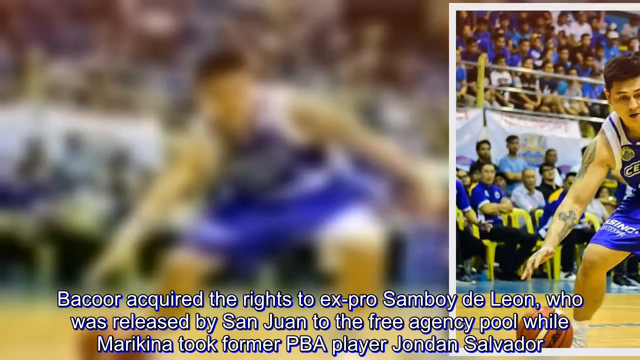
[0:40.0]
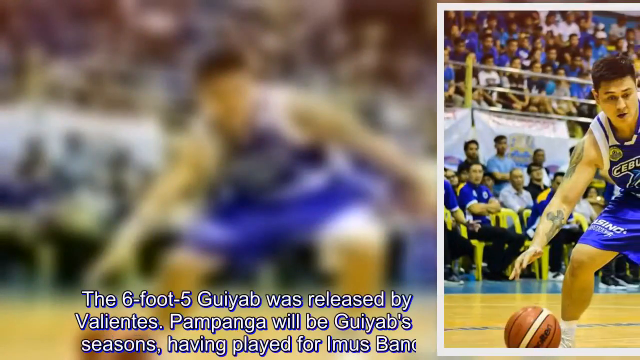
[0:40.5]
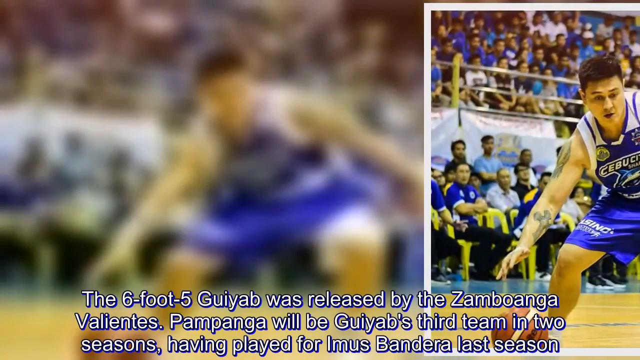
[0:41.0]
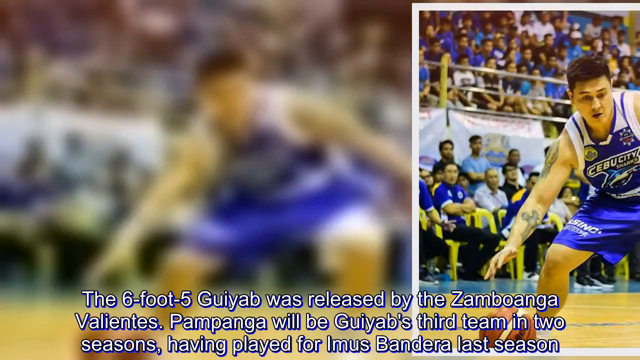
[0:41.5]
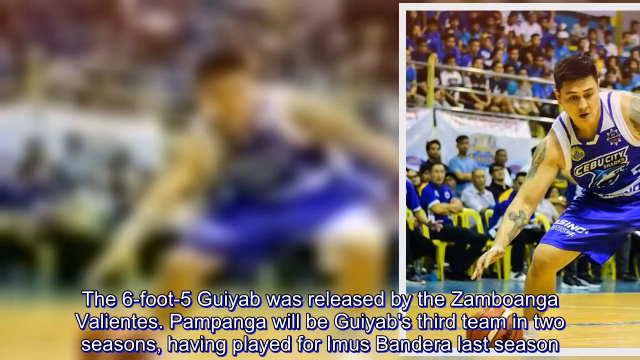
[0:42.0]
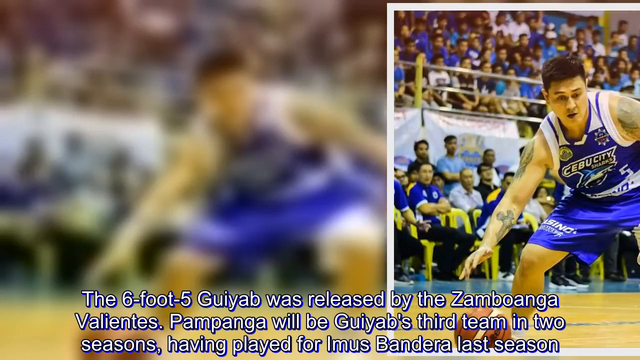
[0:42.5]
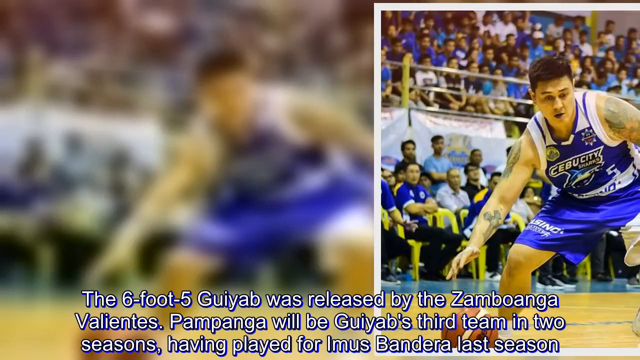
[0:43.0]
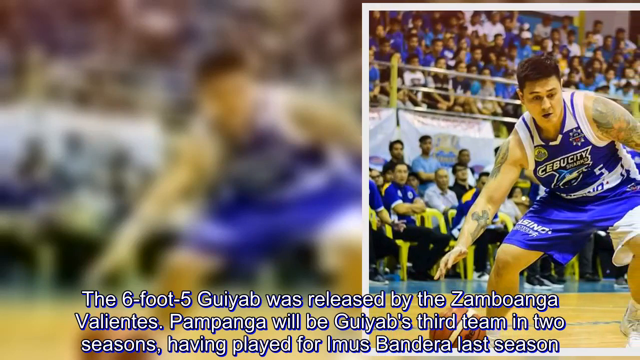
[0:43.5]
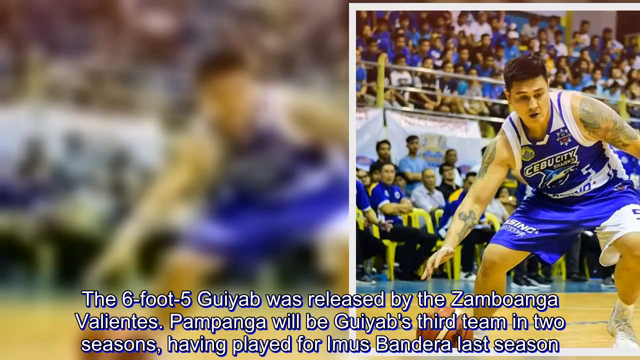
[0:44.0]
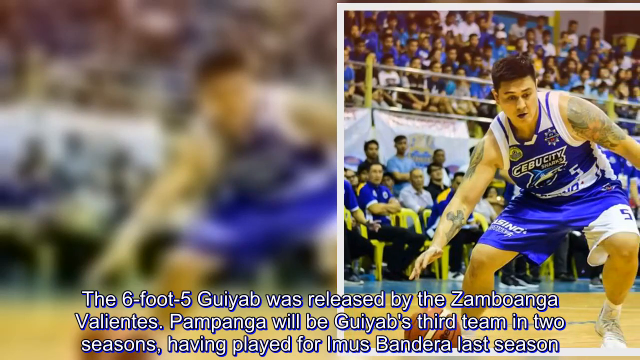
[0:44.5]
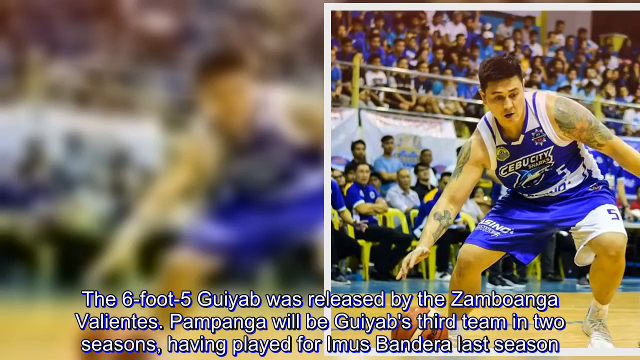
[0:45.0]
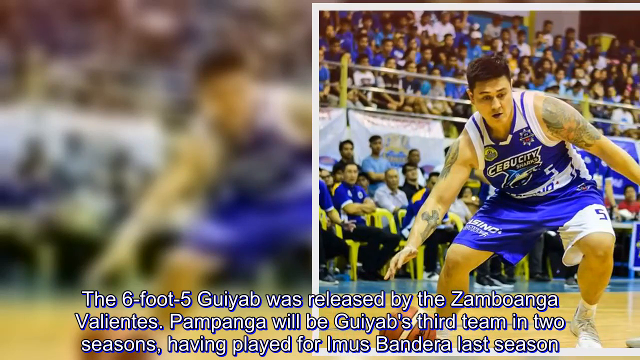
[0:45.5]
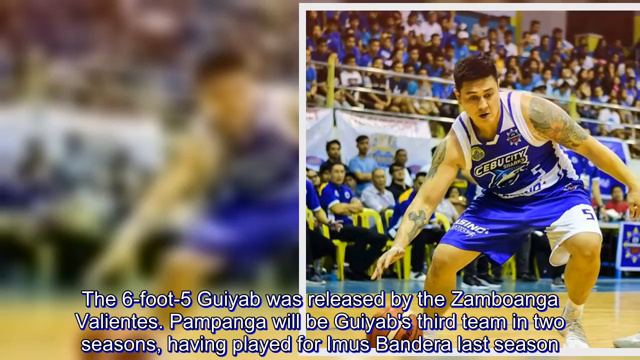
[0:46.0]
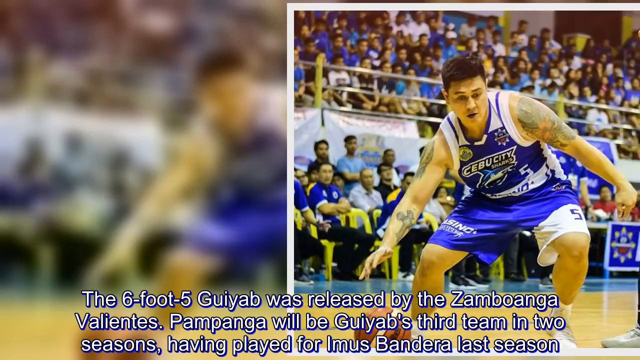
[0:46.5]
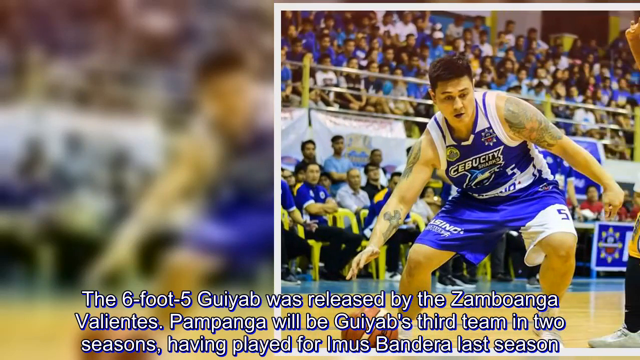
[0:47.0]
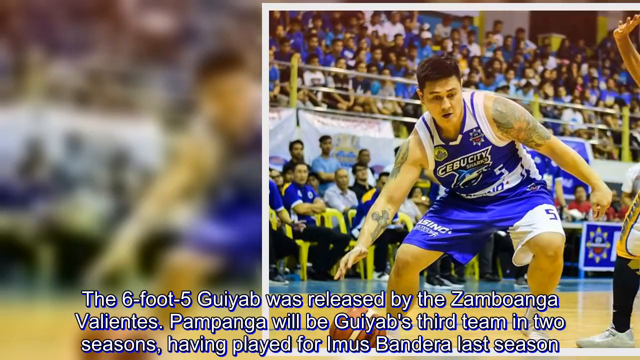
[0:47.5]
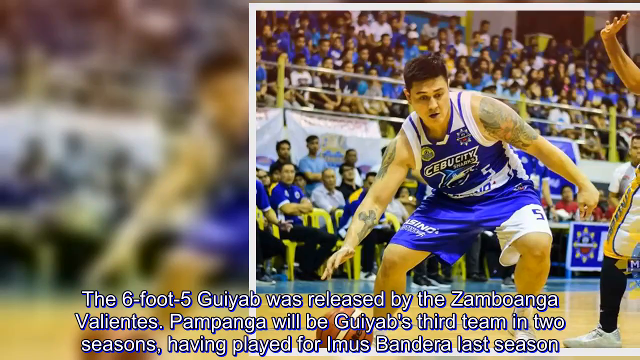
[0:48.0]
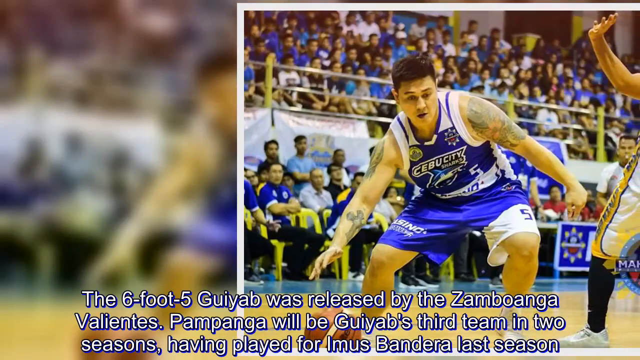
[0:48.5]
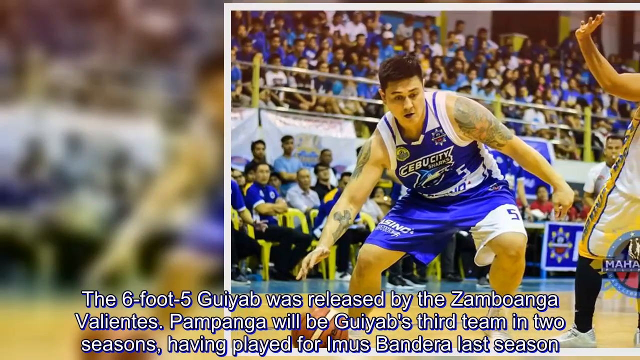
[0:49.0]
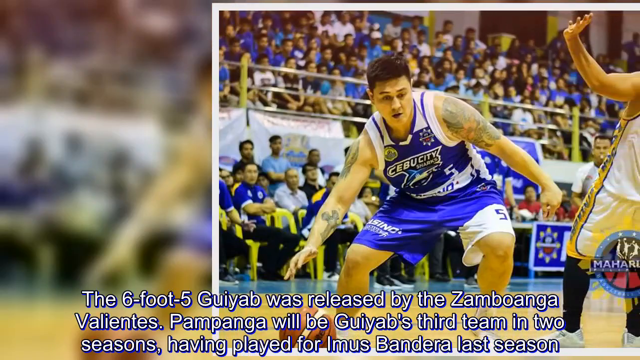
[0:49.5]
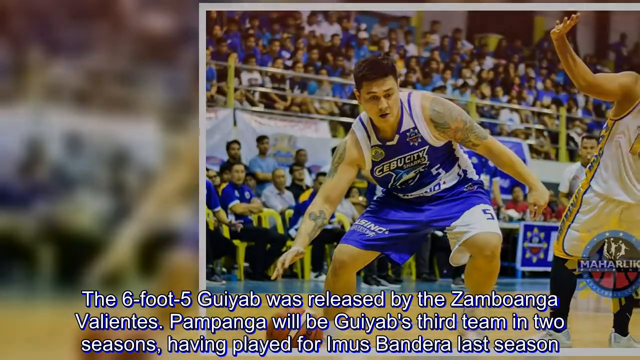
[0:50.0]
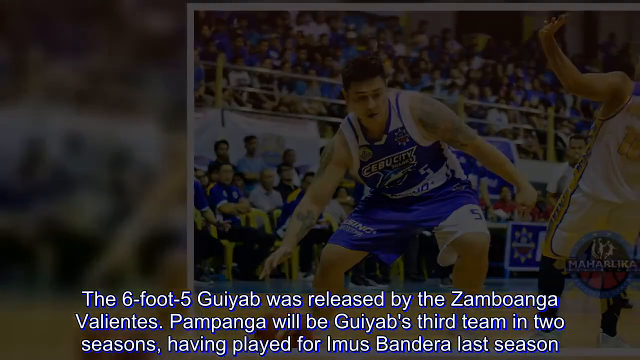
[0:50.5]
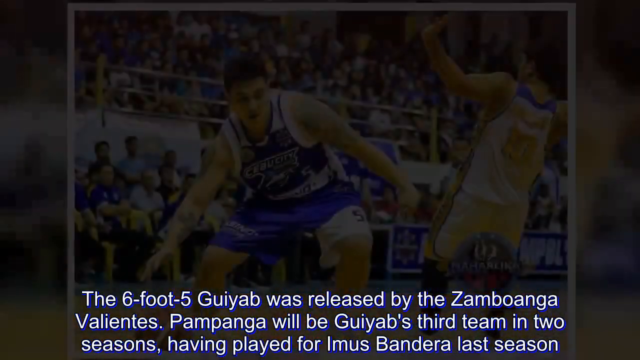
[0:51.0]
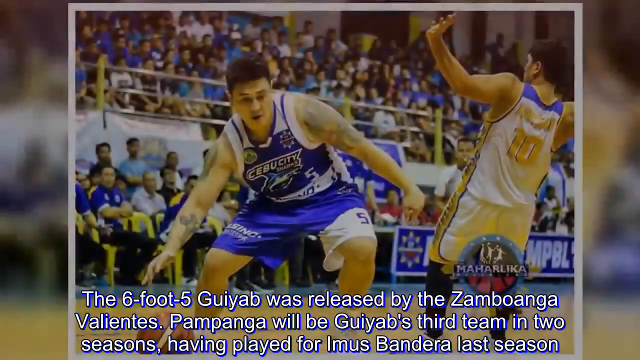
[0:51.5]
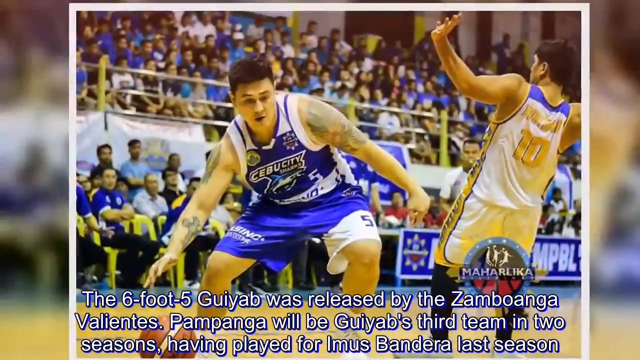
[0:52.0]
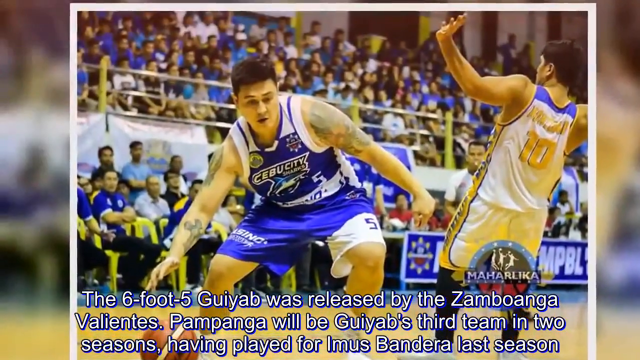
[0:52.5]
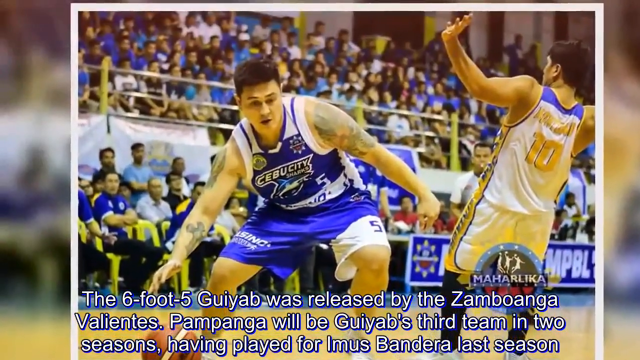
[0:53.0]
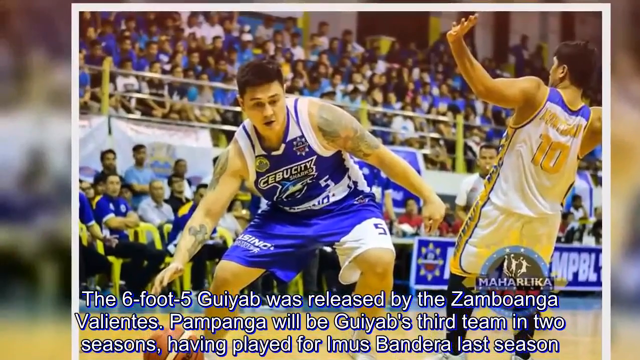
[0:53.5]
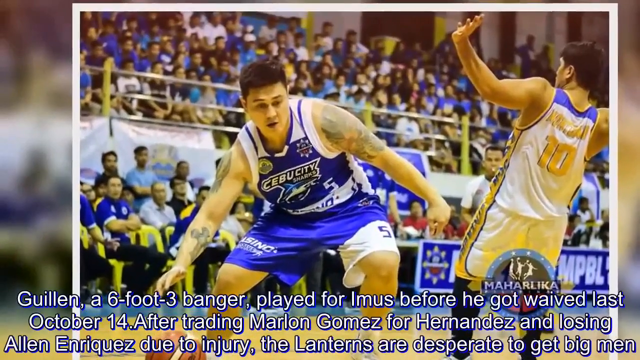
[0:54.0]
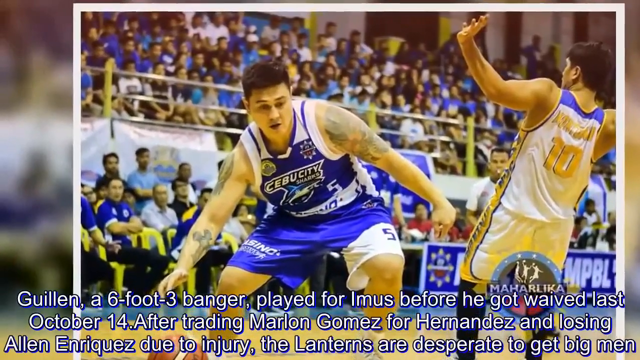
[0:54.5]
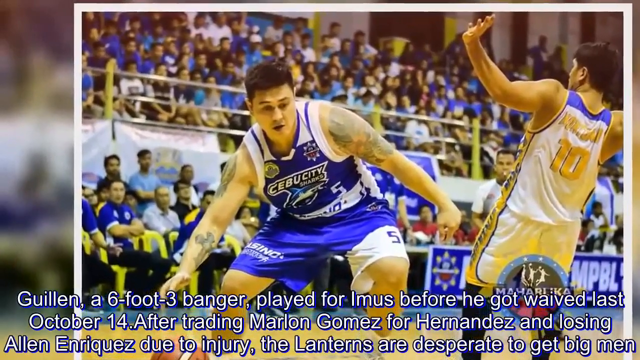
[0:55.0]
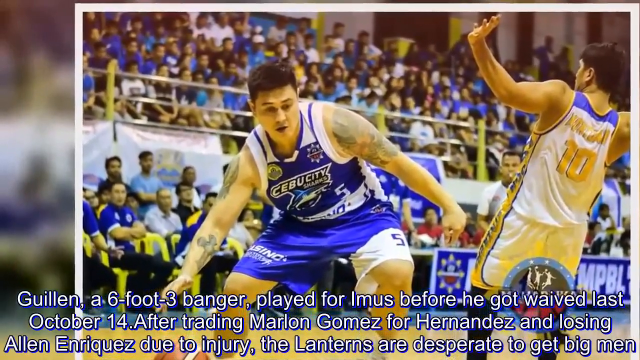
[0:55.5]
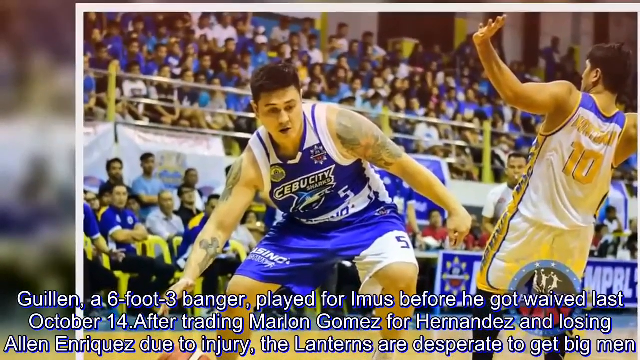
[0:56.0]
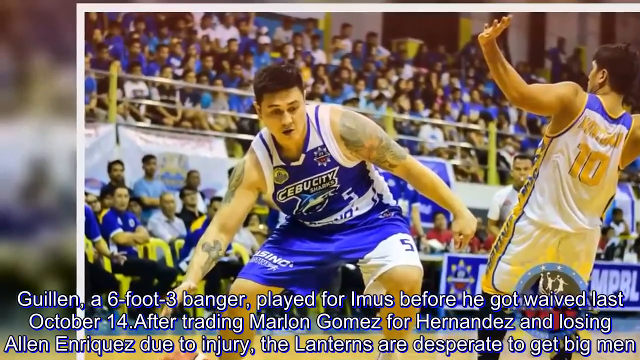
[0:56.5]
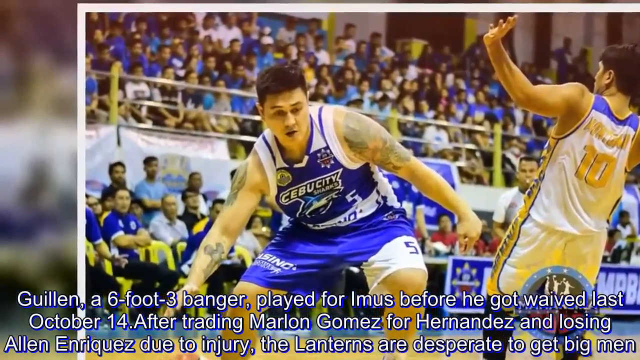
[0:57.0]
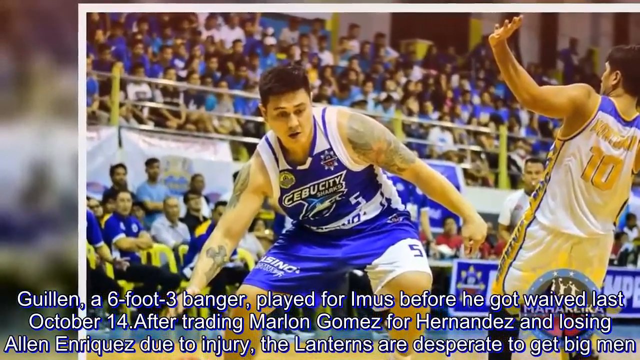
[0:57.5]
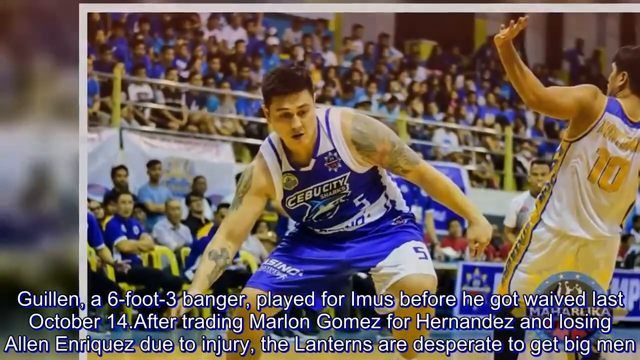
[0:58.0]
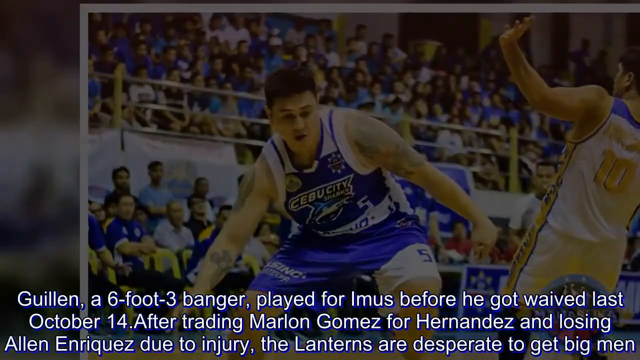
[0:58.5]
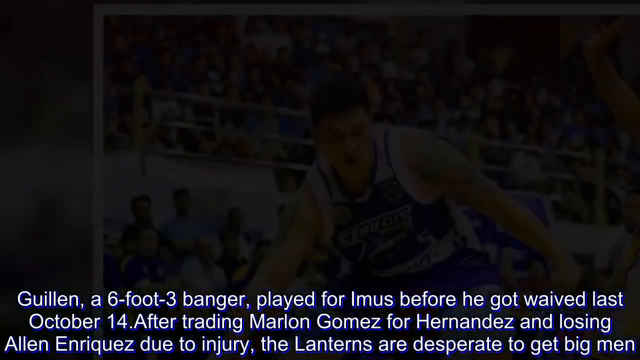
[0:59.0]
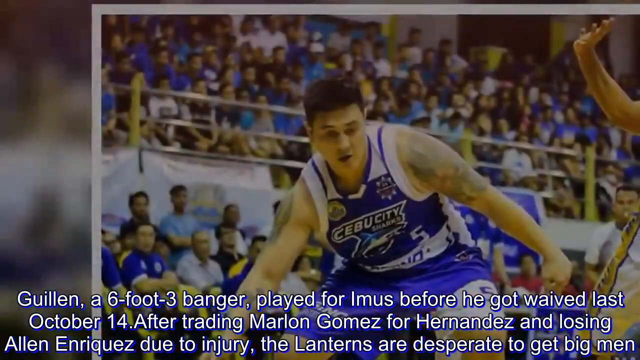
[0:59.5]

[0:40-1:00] The single picture slides from left to right and from right to left. The text continues with information about a 6-foot-5 player who was released and a 6-foot-3 player.